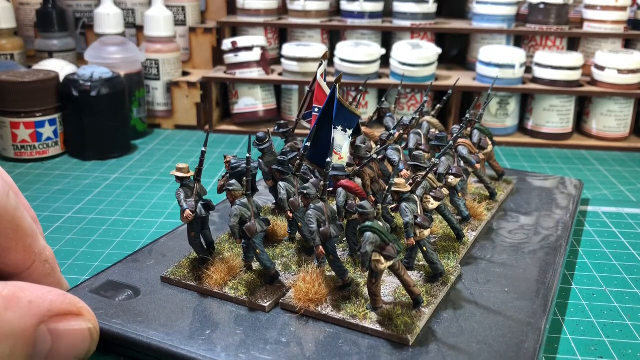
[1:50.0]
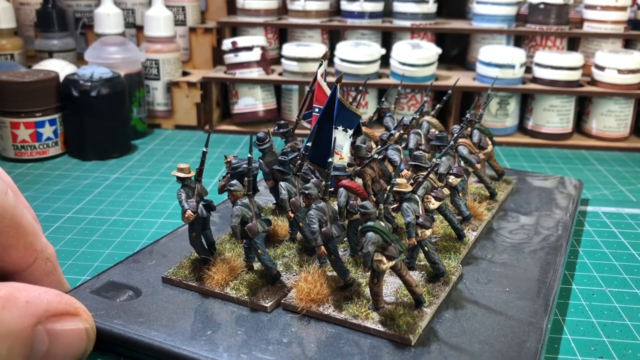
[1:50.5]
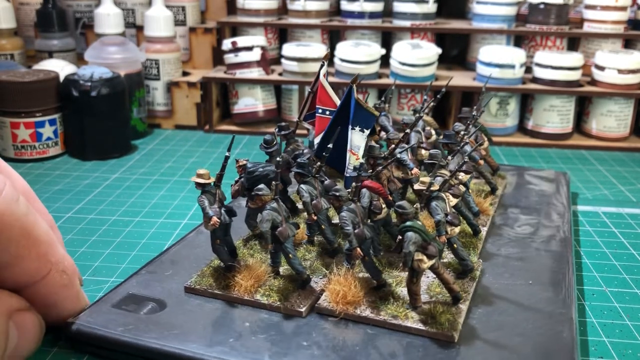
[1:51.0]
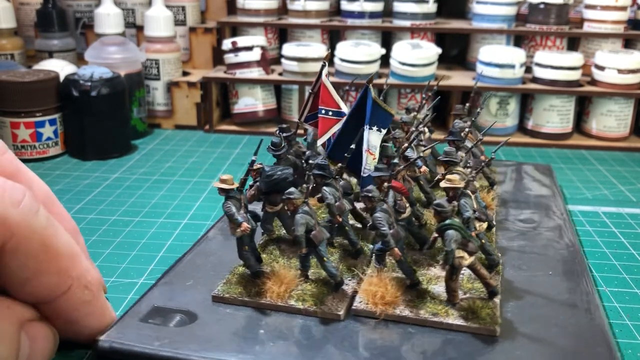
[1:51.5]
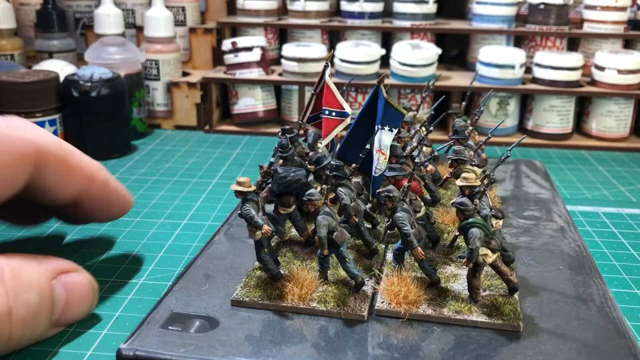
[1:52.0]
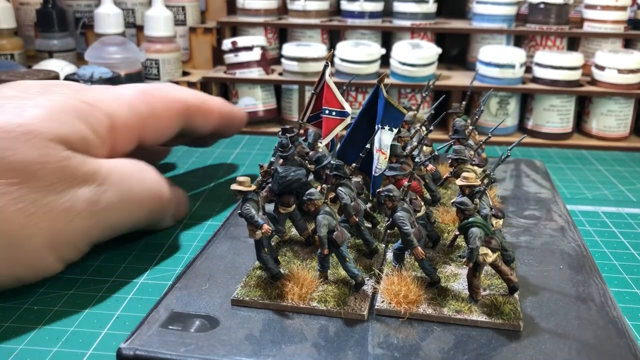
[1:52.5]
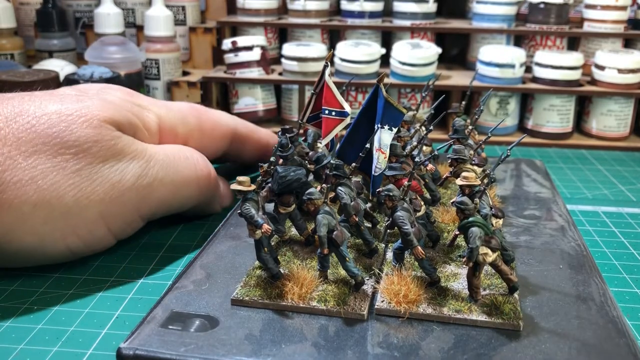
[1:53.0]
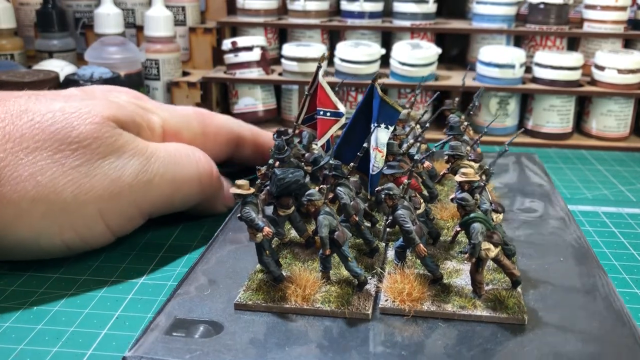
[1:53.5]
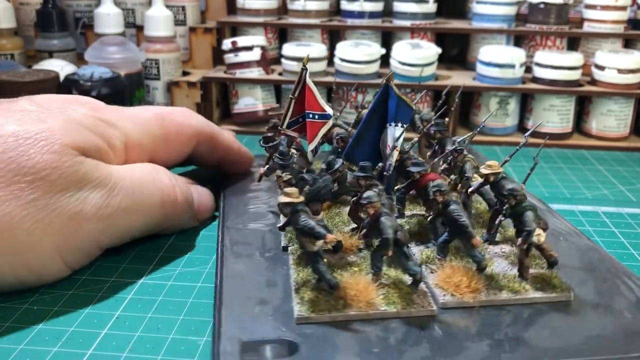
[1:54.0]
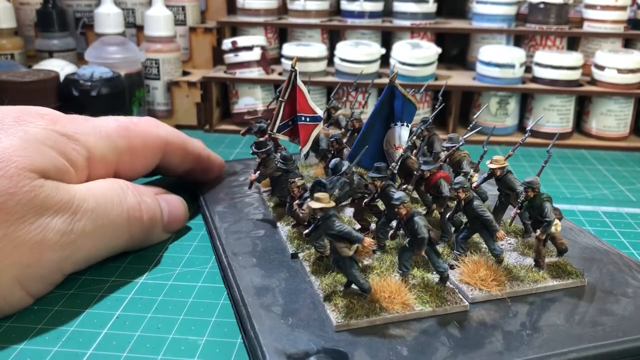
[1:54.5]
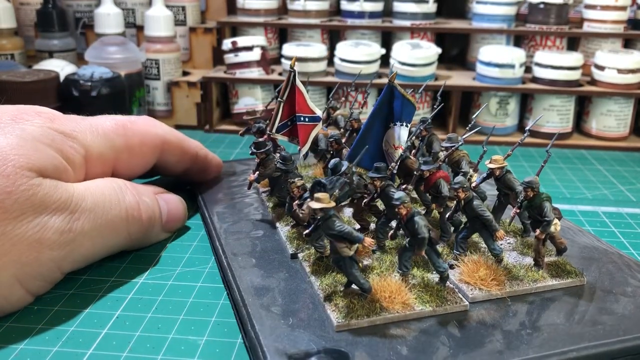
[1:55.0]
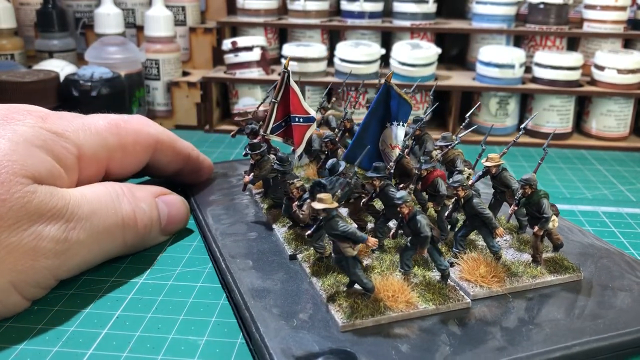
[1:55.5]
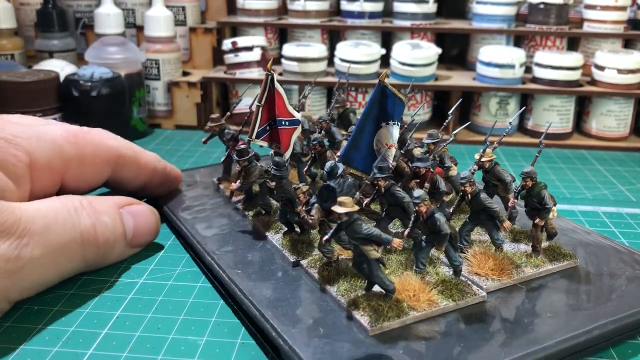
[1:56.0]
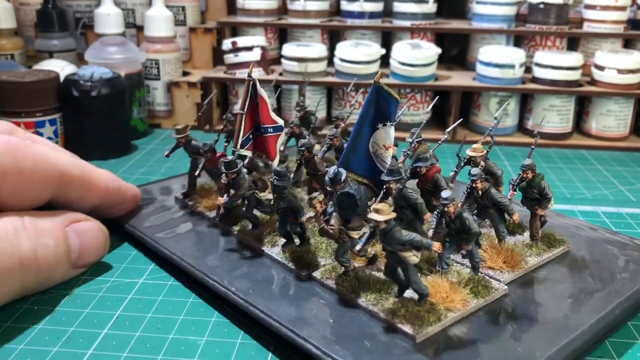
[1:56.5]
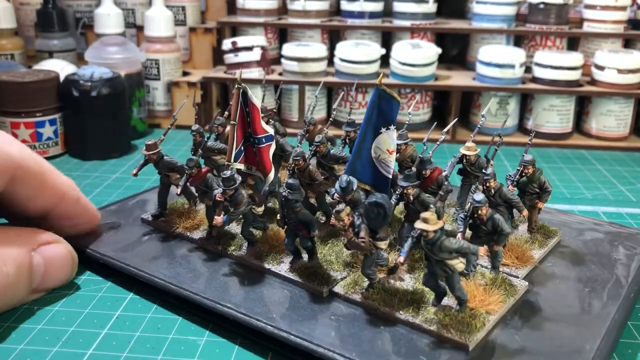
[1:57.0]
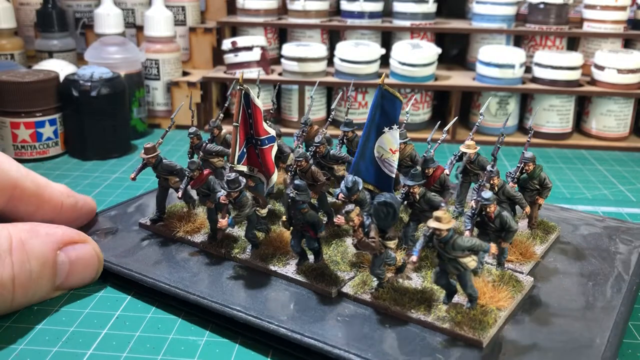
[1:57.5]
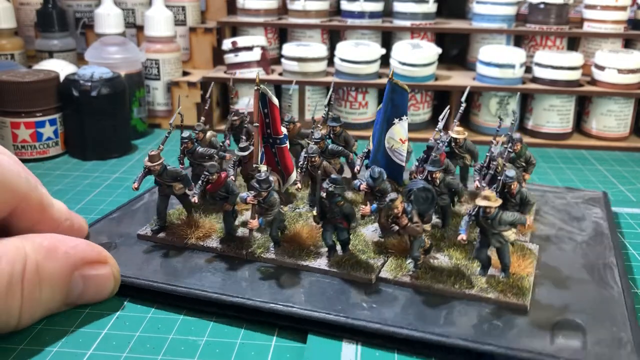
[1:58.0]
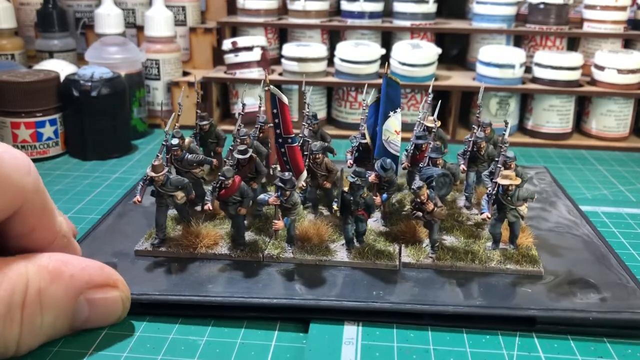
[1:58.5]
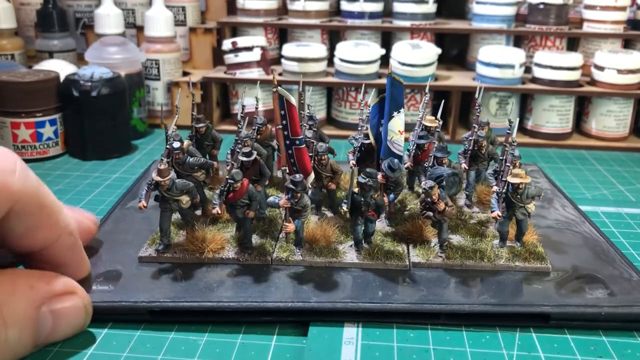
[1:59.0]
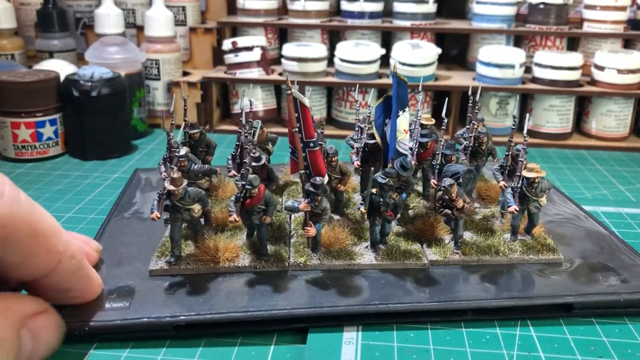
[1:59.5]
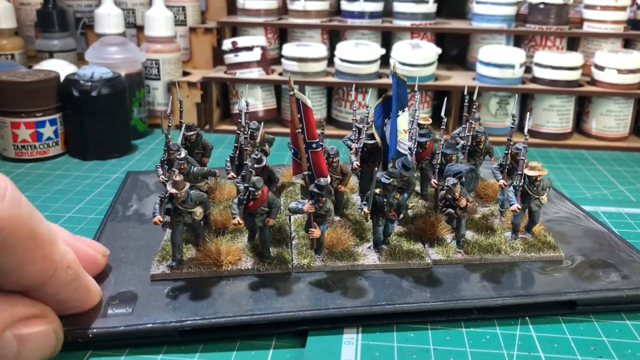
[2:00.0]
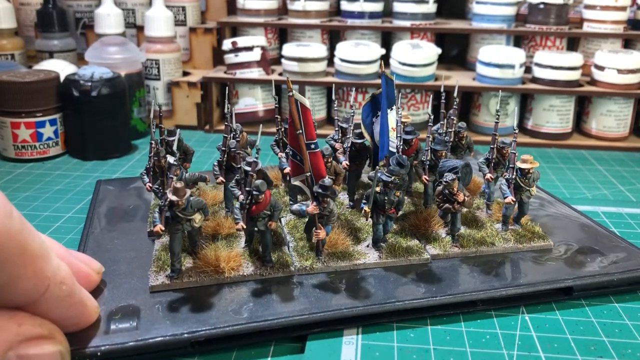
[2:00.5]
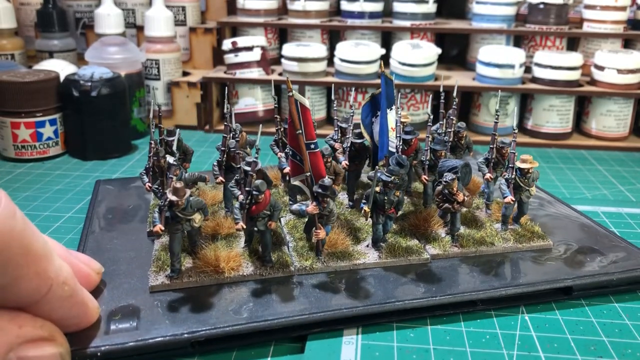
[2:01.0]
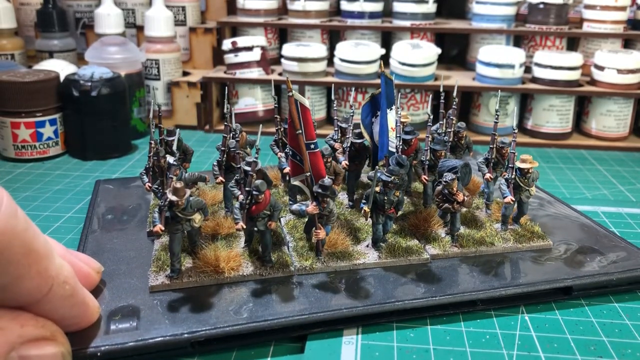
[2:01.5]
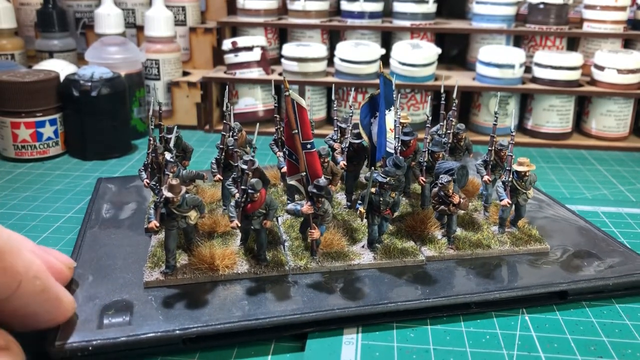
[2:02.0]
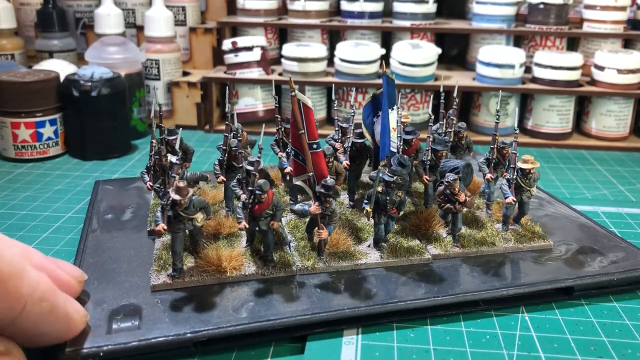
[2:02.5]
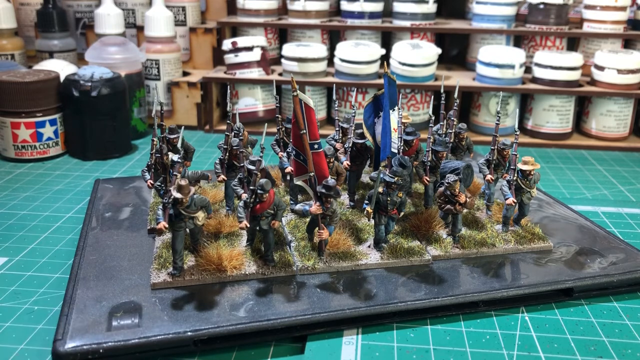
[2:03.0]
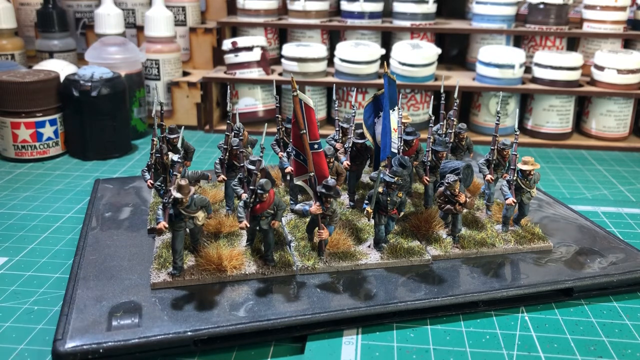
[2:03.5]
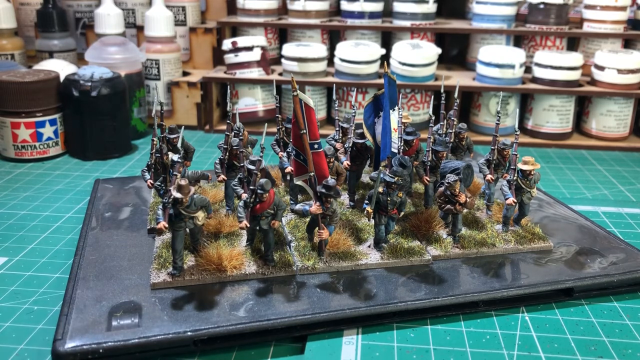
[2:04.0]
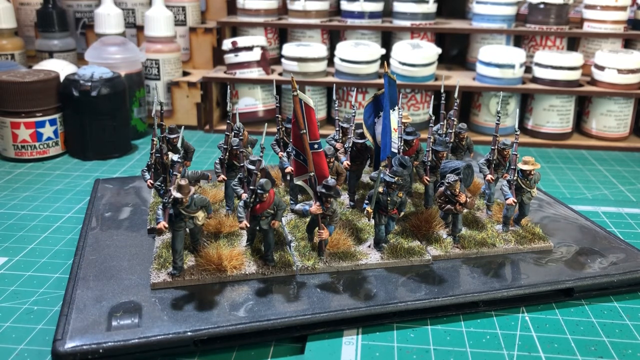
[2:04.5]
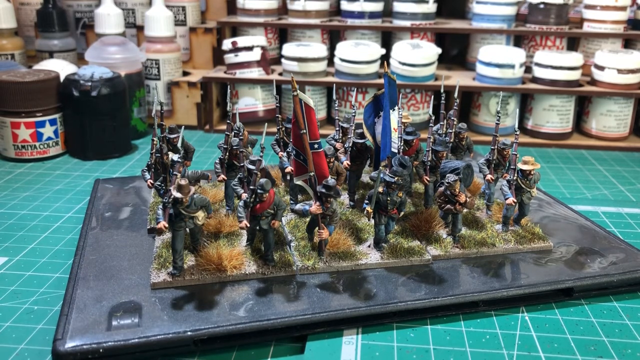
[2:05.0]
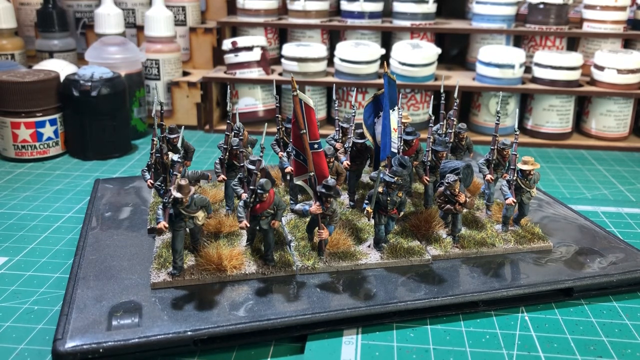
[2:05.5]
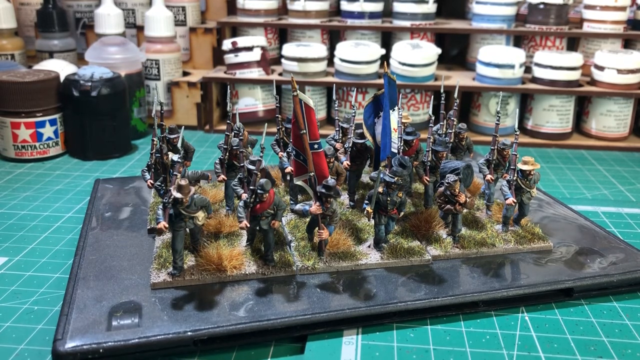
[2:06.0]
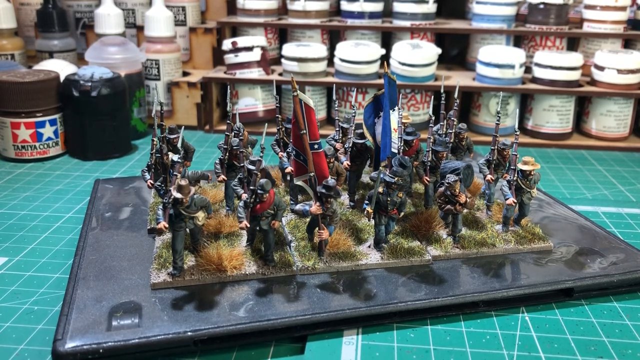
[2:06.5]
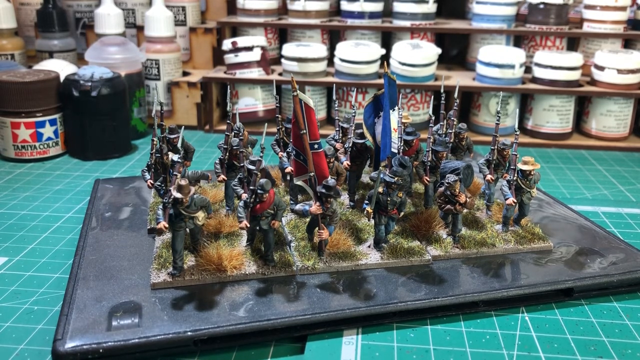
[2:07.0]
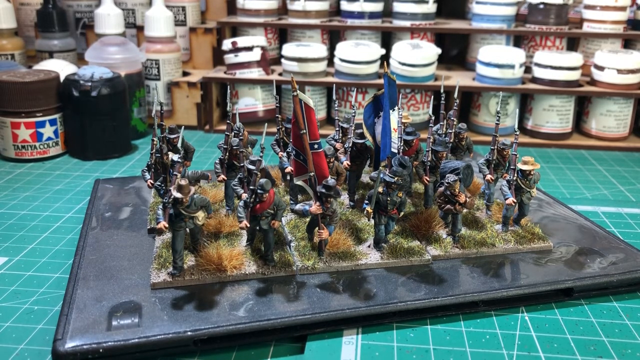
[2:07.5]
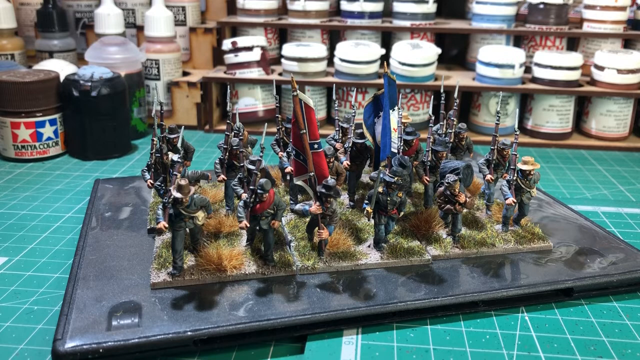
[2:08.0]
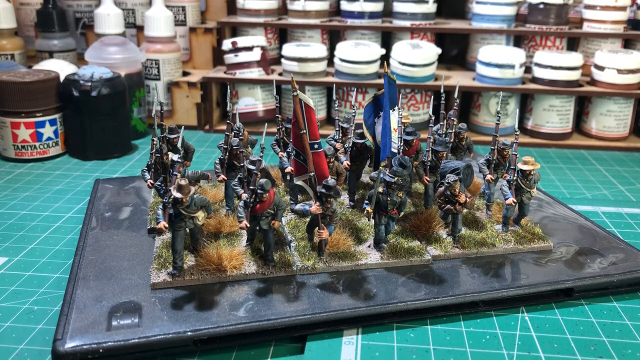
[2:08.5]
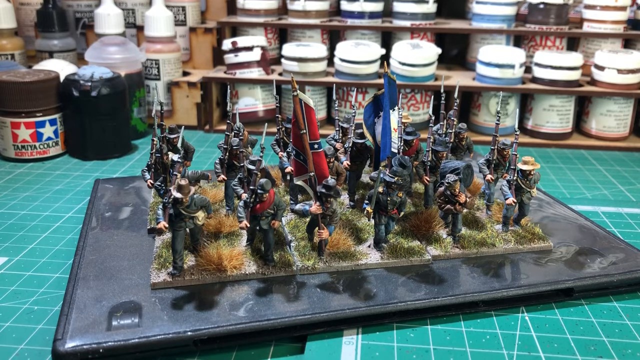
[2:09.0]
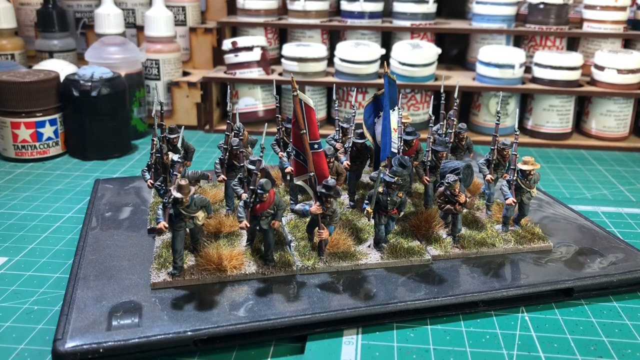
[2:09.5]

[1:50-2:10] The male human hand moves the figures from one side to the next. The figures are in a workshop setting, with paint behind them. The hand likely belongs to the person who created the figures. The figures are very detailed, male and war-based, and they carry weapons and flags.